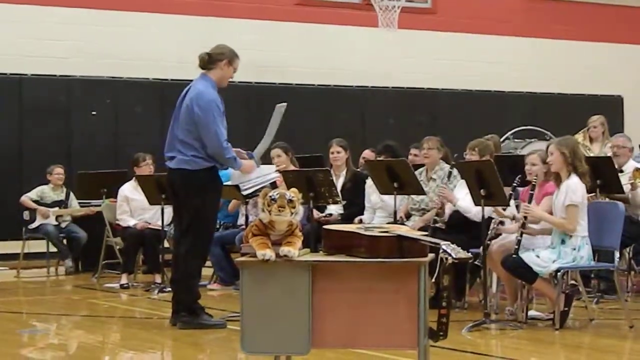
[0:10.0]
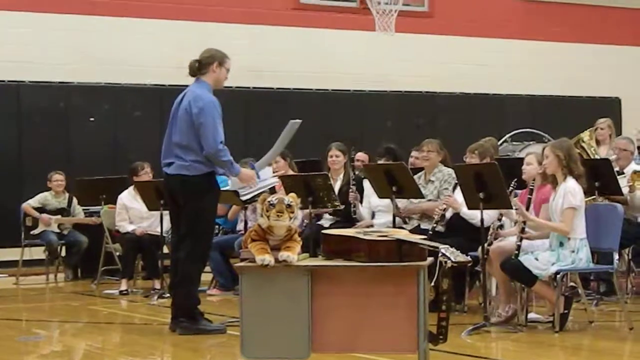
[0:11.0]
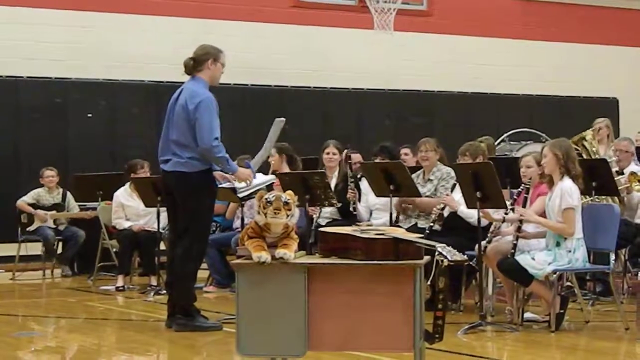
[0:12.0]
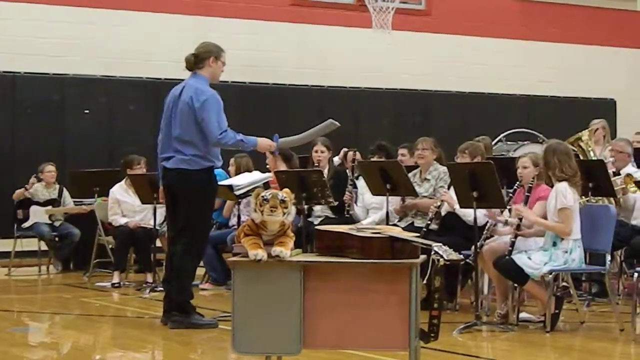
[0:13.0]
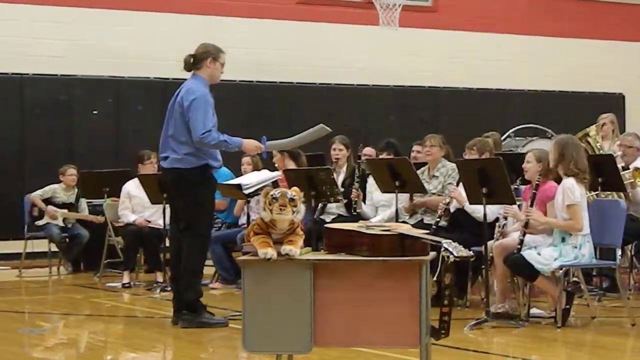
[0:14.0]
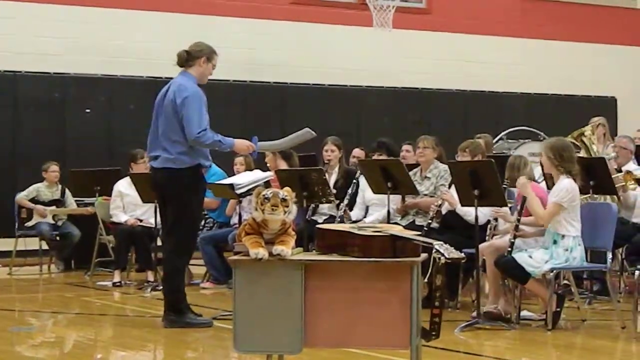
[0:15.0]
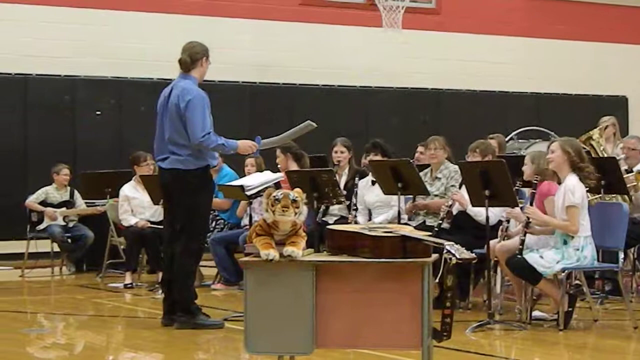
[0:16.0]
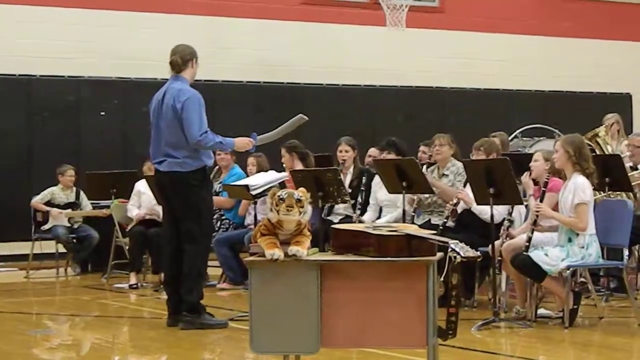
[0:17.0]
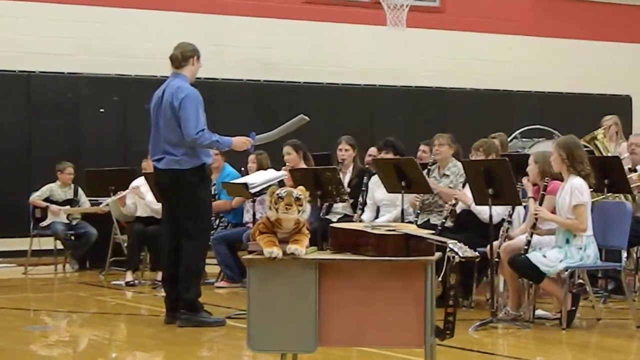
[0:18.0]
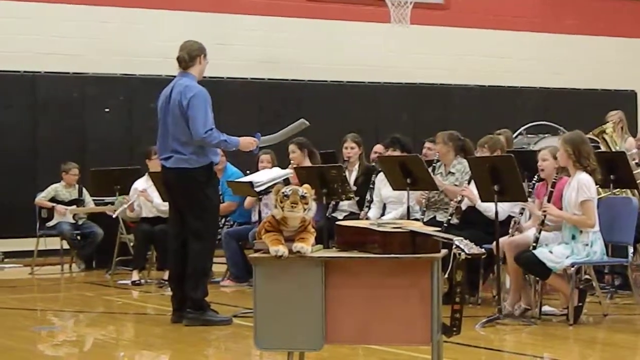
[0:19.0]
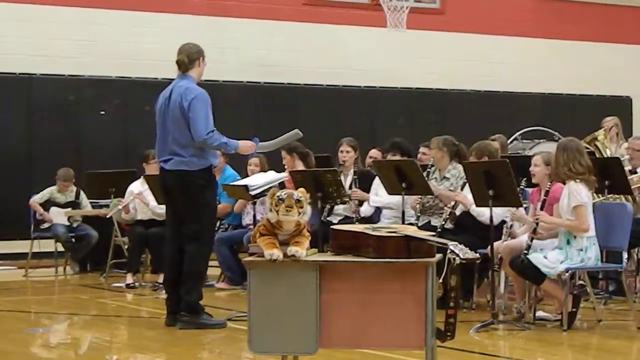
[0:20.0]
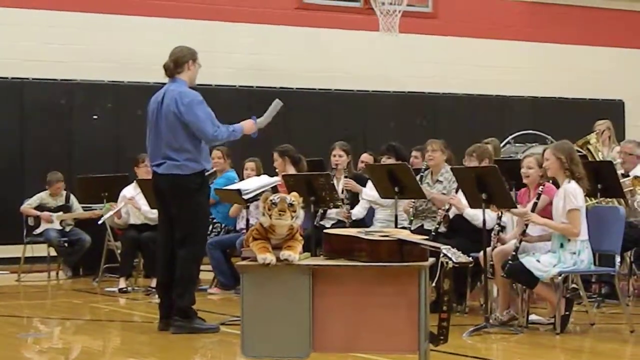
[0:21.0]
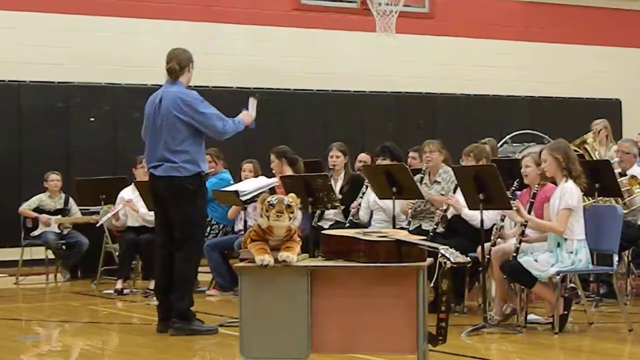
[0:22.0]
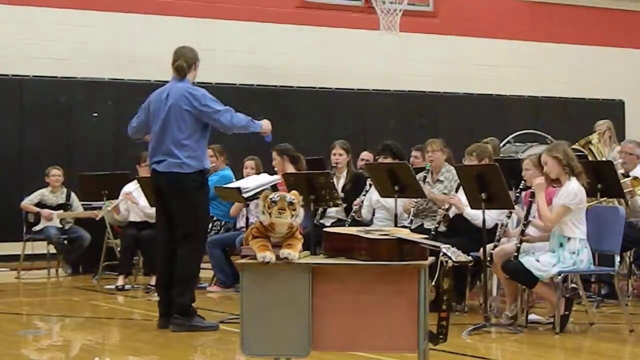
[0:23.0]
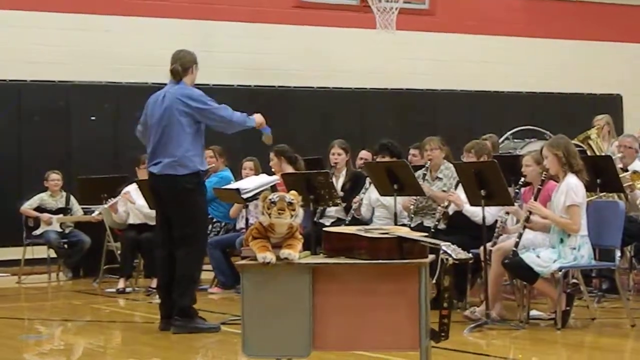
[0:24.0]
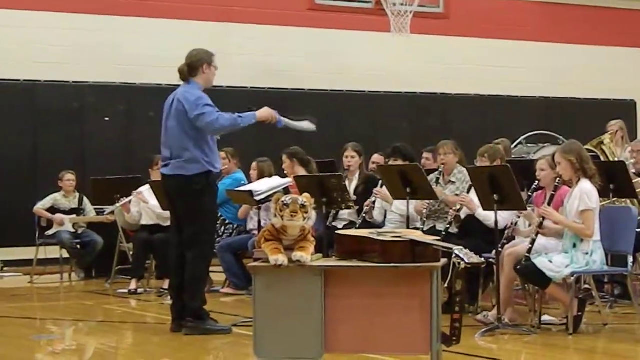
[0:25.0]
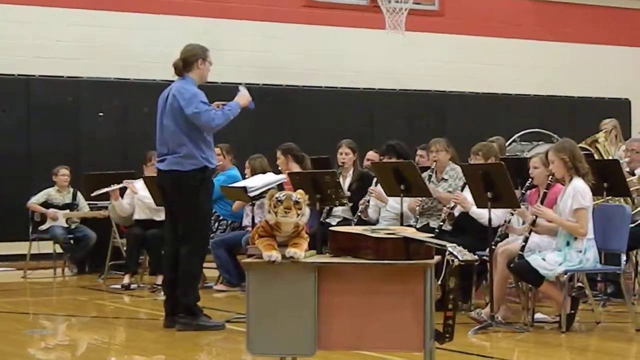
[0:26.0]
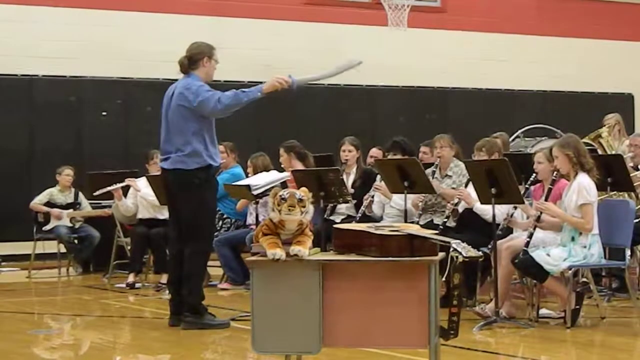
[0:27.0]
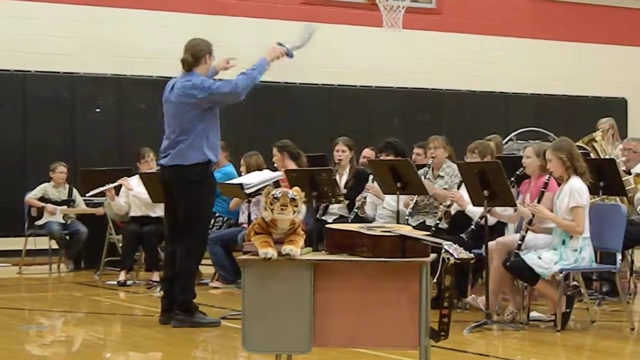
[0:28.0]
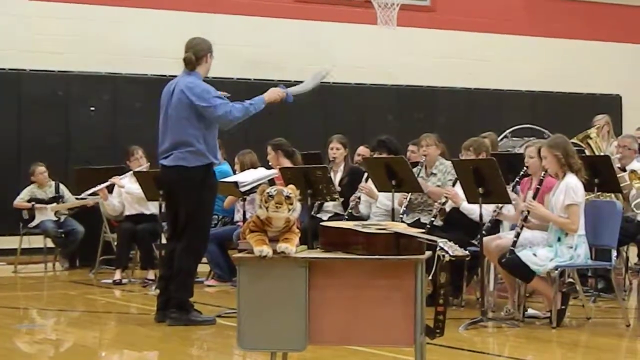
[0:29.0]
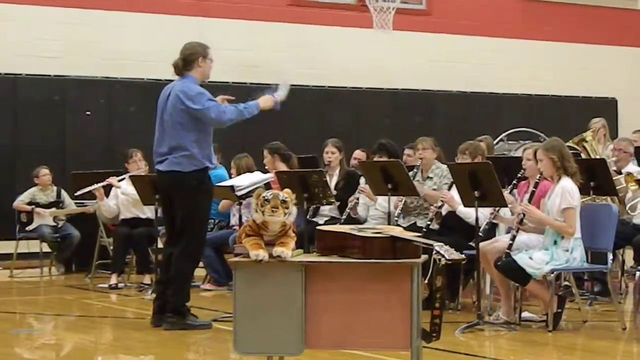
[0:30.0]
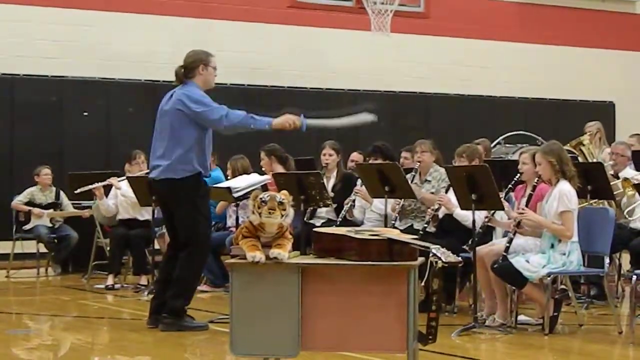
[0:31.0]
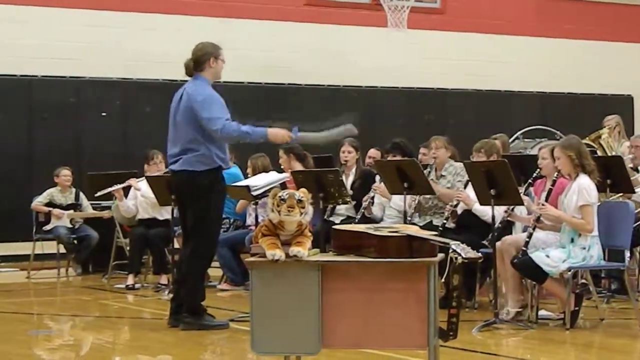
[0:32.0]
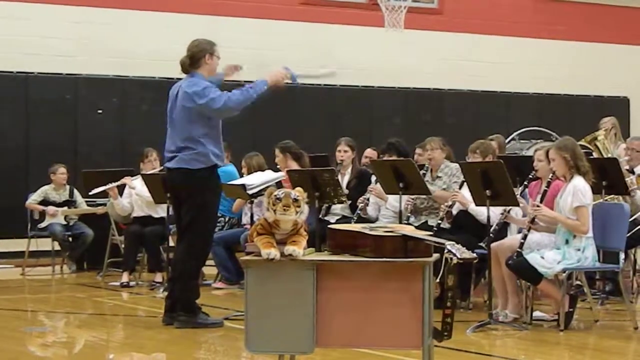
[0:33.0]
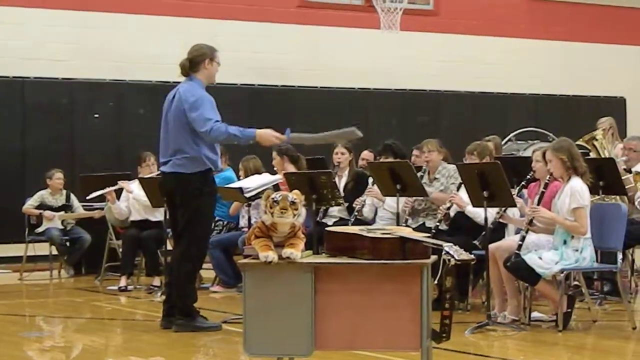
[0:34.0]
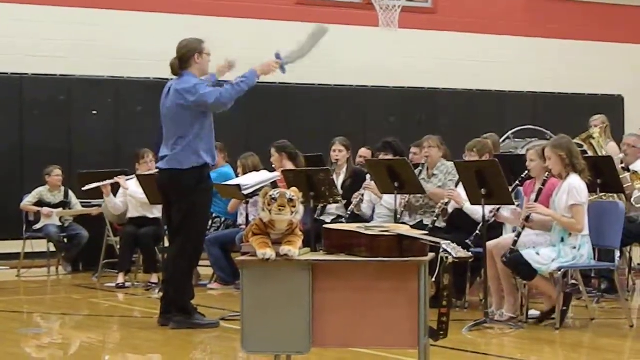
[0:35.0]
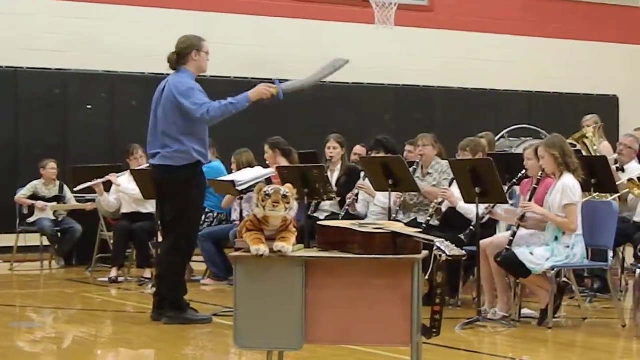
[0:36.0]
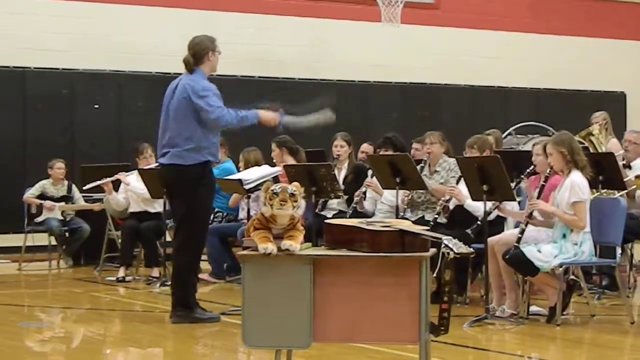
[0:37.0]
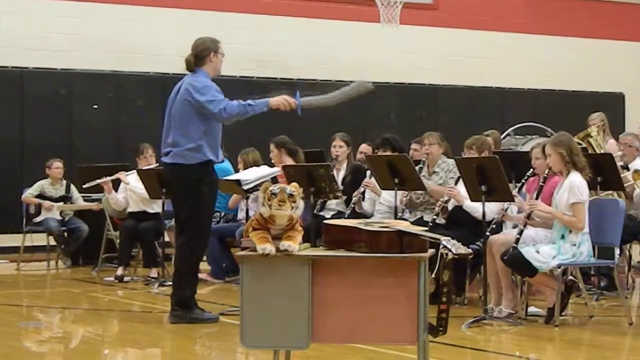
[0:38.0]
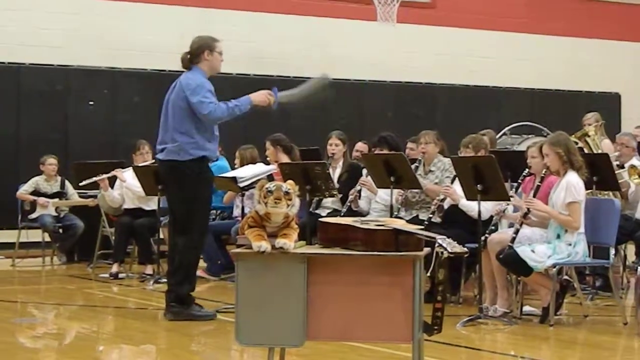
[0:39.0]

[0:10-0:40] A man in a long-sleeved blue shirt and black pants conducts what looks like a school band seated in what looks like a gymnasium. Some of the participants are young people who look to be in their early teens, seated toward the front, while there are some adults in the center and toward the back. The conductor holds a plastic sword and uses it to conduct as if it were a baton. He stands in front of a podium with sheets of music in front of him. To his right is a desk with a stuffed tiger facing the camera and a guitar laying on its back. A basketball hoop is on the wall behind the group, and there appears to be black padding along the wall as well. Each player is seated in front of a music stand. At least three people hold clarinets, and a young boy off to the side plays an electric guitar. There appears to be a large drum in the back.